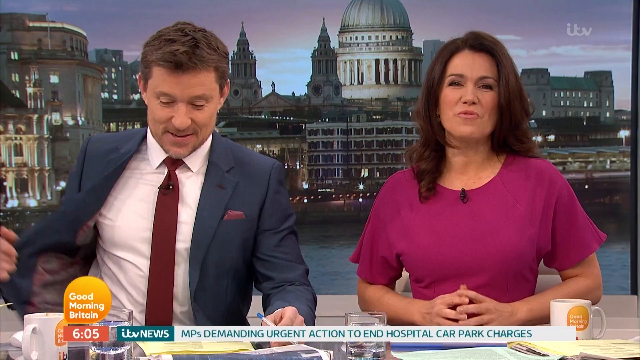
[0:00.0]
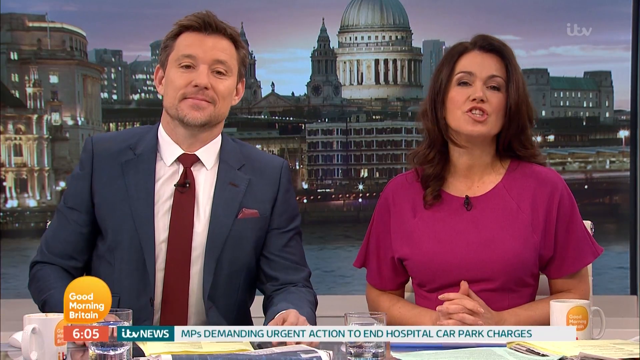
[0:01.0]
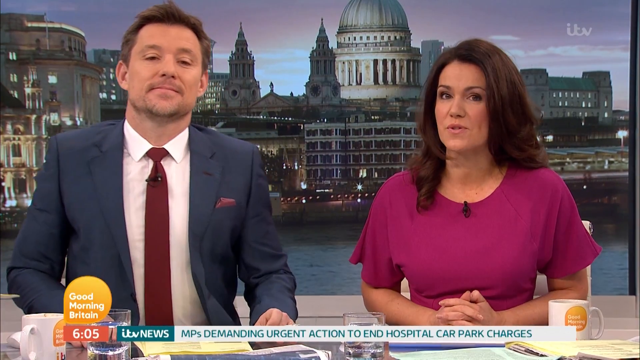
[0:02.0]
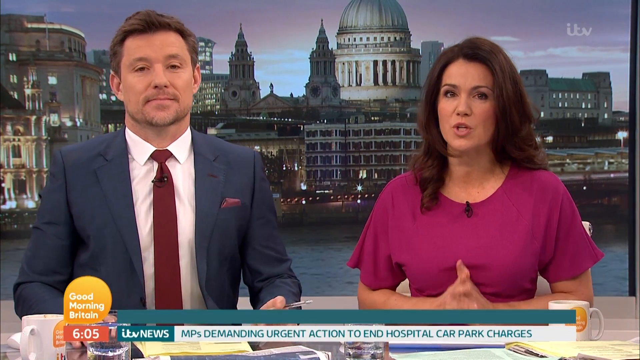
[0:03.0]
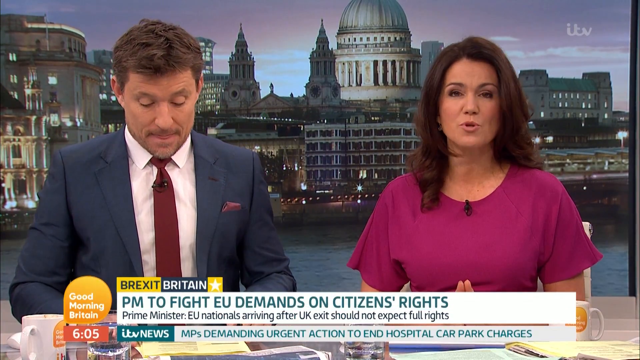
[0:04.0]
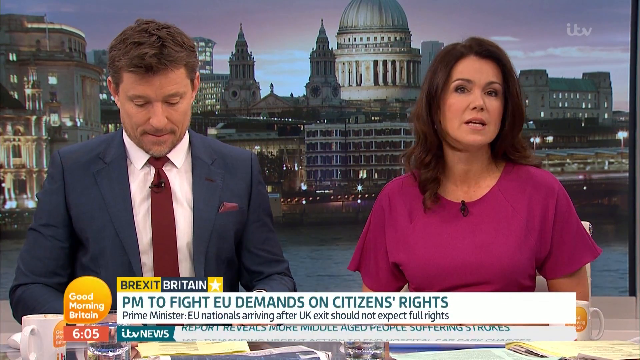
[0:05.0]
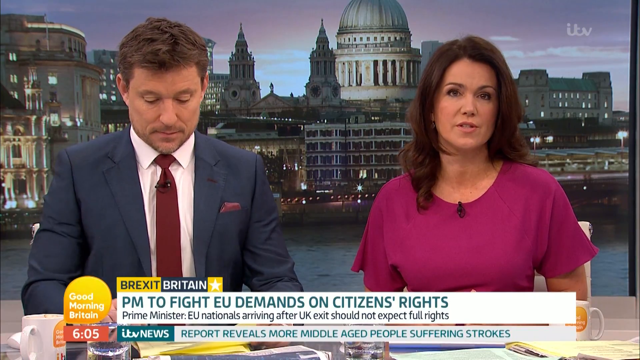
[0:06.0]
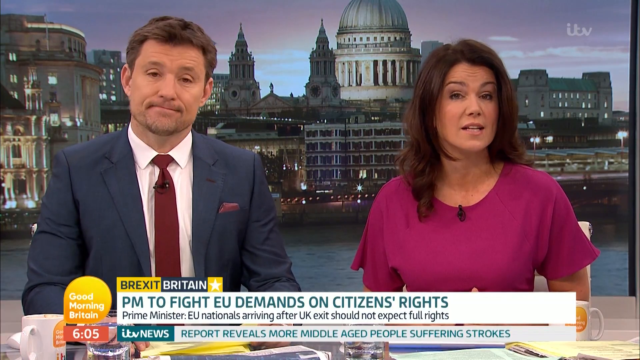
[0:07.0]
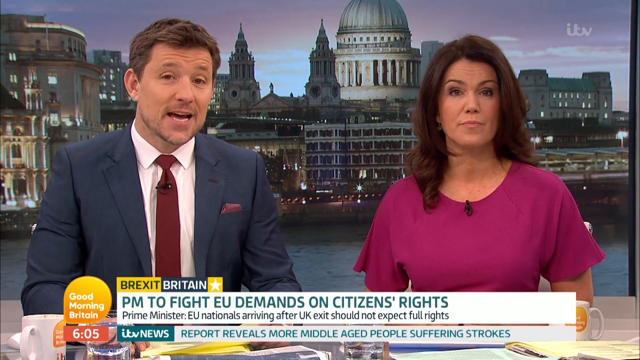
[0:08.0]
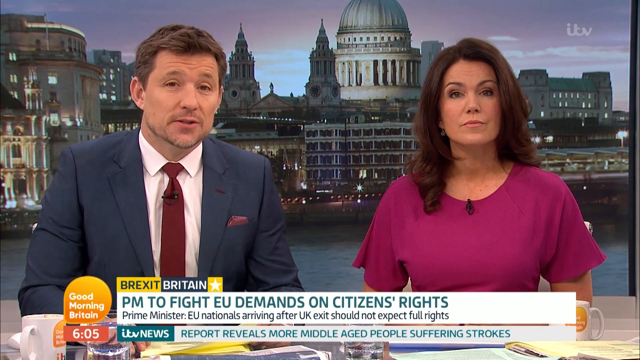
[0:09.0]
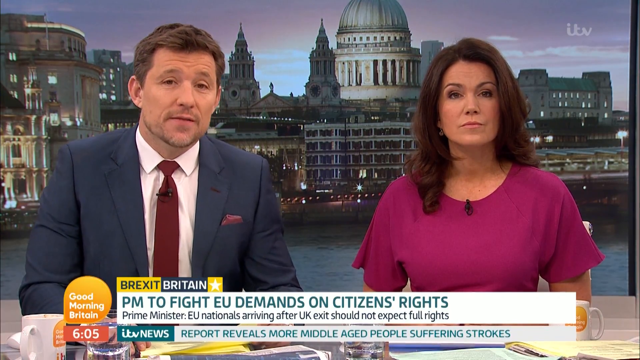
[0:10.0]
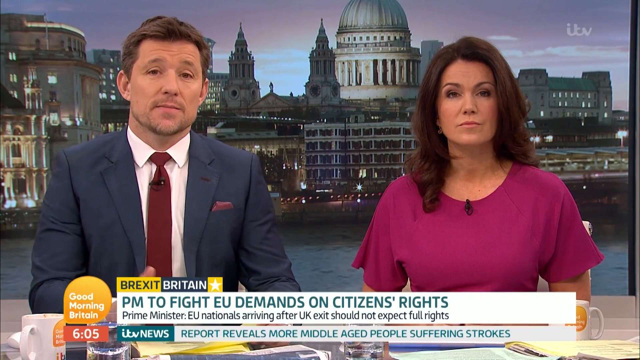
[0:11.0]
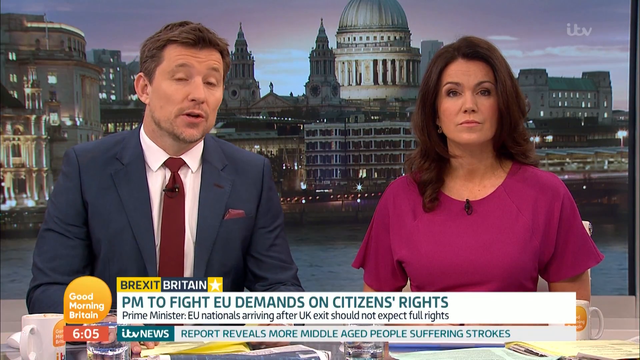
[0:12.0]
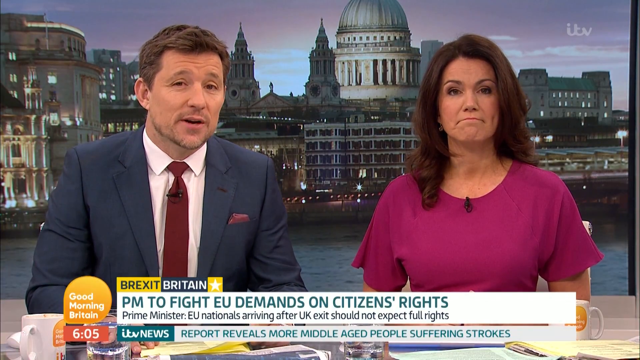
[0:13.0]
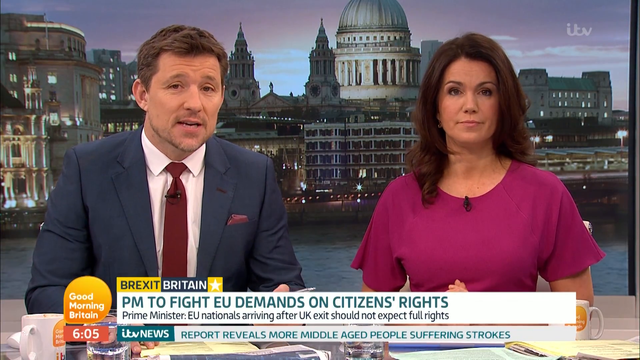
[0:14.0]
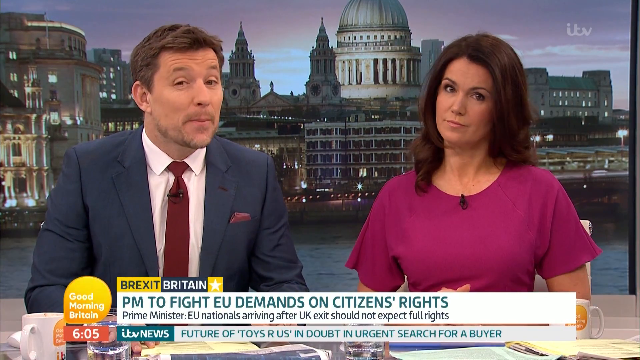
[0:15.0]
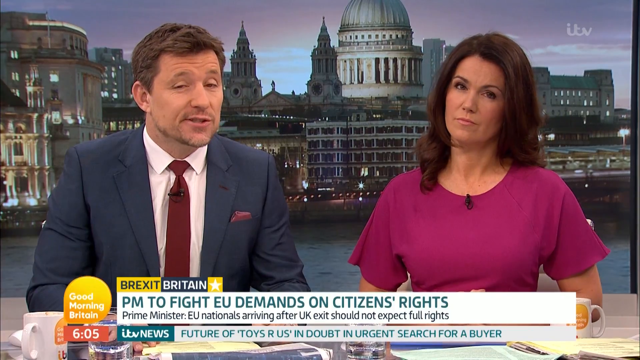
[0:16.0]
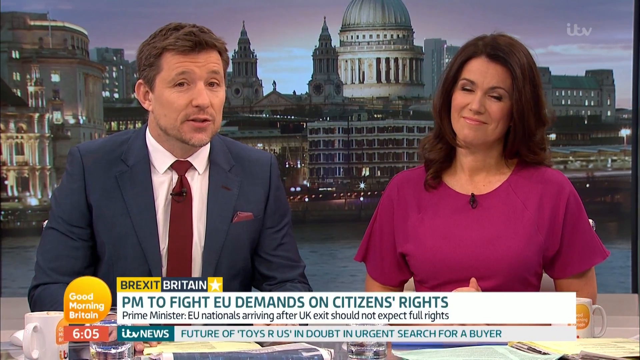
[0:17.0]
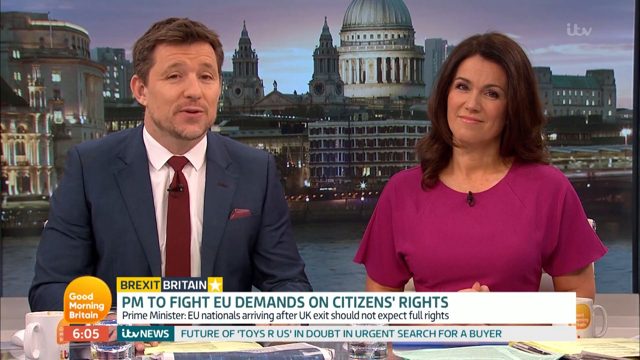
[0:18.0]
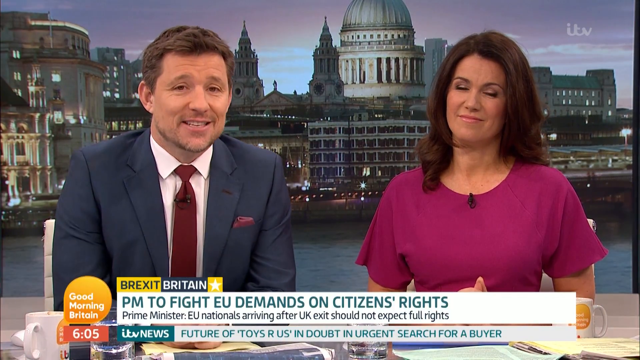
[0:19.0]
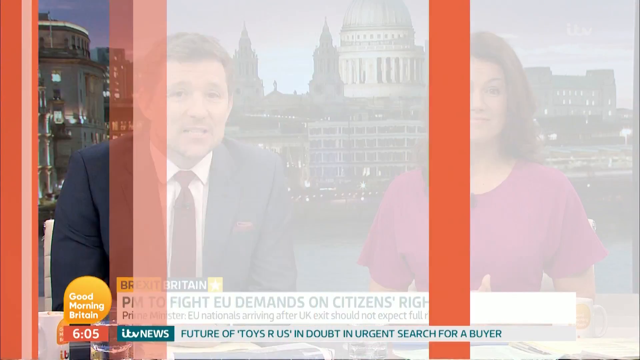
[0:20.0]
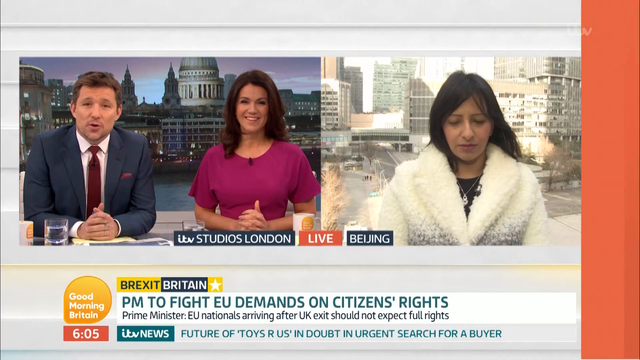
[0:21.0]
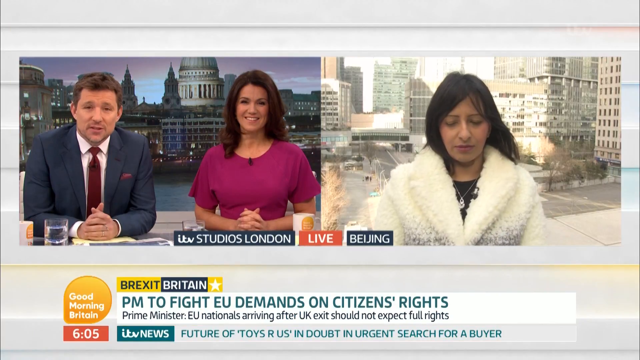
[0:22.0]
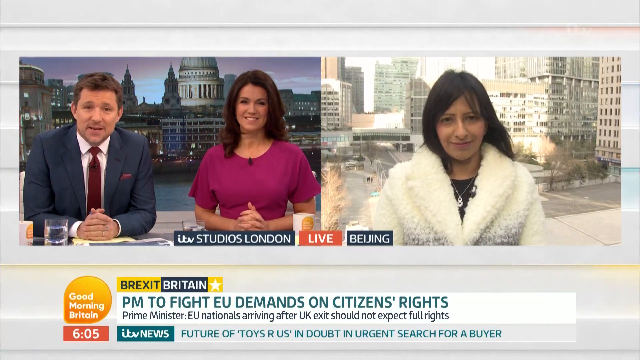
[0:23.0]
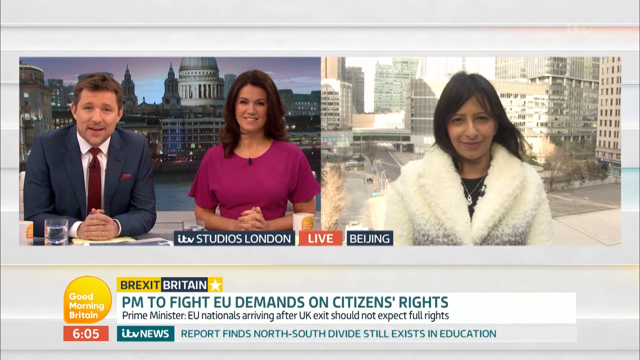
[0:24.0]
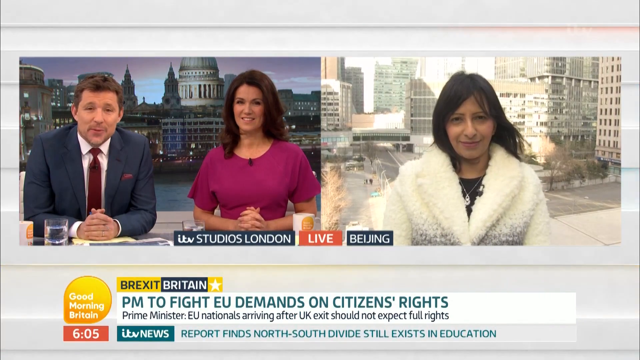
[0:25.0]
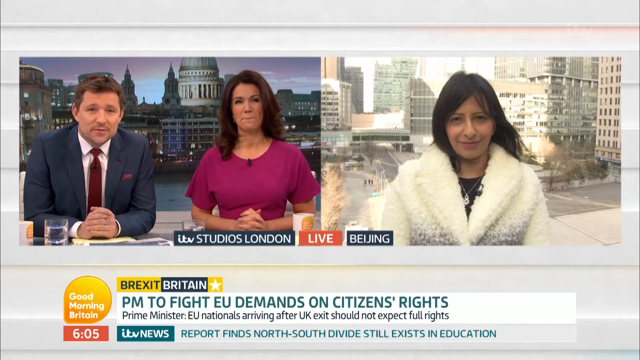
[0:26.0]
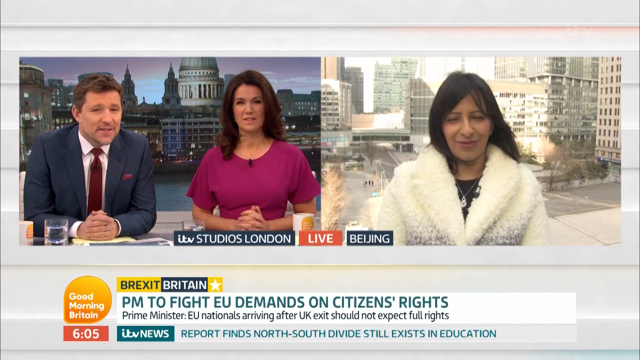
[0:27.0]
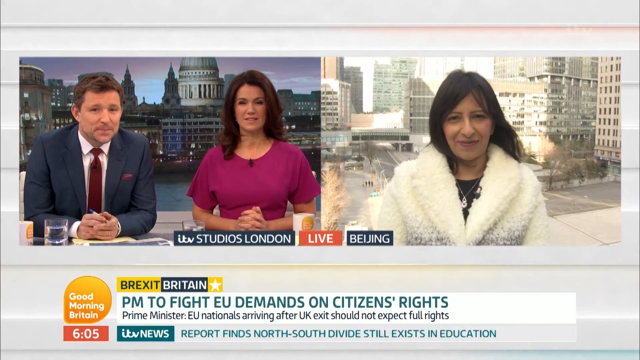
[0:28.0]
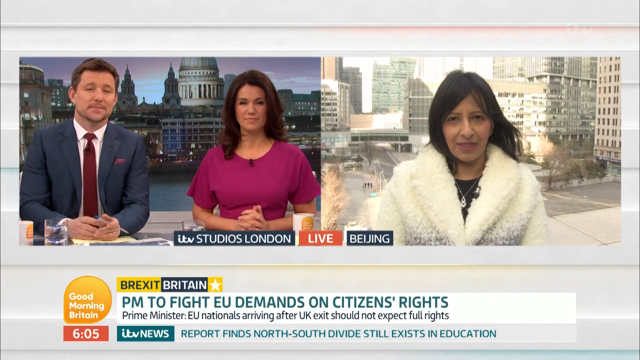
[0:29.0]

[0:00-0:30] A handsome man in a suit wears a blue blazer, a white t-shirt and a red tie; he looks American. Sitting along his left side is a beautiful woman in a dark pink dress, wearing a weave. They are going live in the morning to report the news: the woman speaks first, and the man follows after she finishes. On the table there is a glass of water near the man, the woman also has a glass of water, and there is a mug that says "good morning Britain". They are reporting live from iTV News. The background seems to show Indian-like buildings next to a sea, and it looks like night.